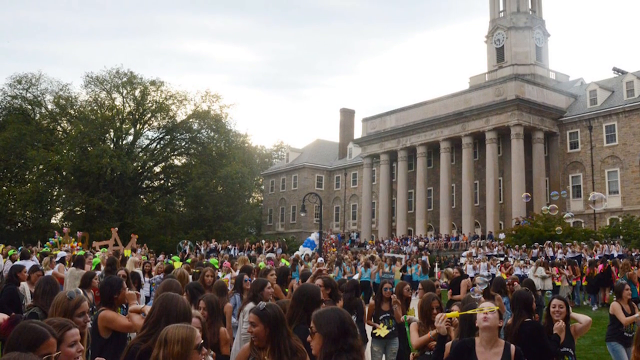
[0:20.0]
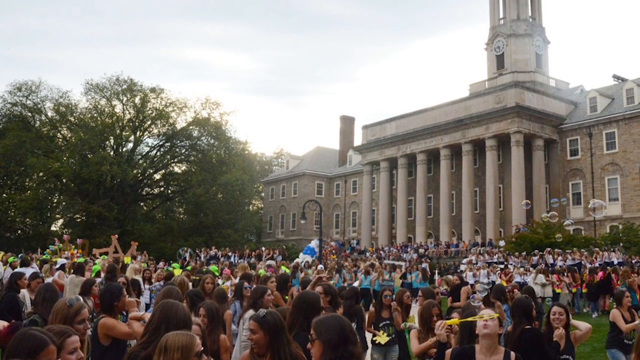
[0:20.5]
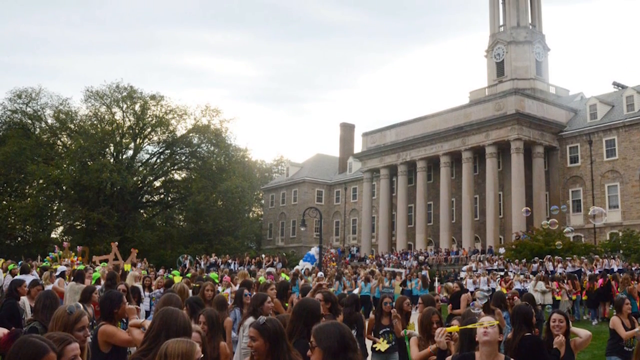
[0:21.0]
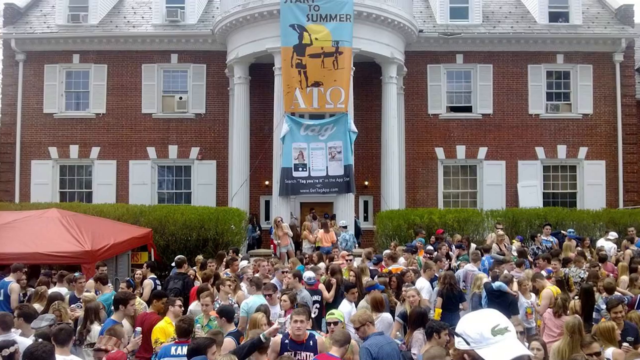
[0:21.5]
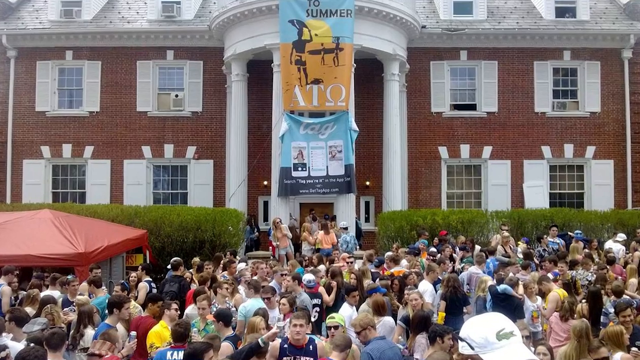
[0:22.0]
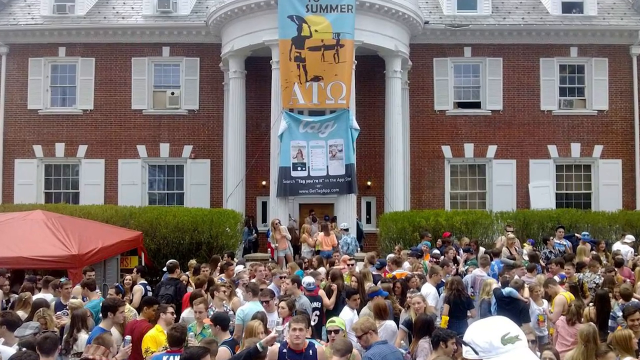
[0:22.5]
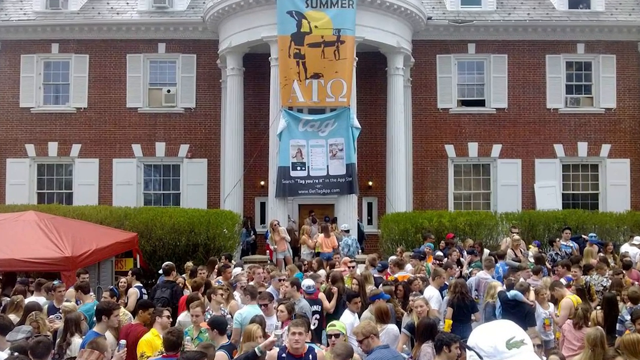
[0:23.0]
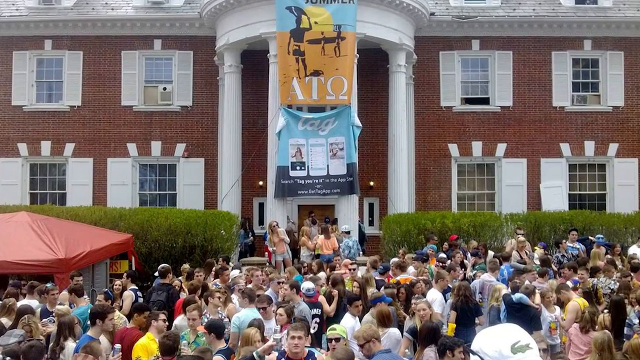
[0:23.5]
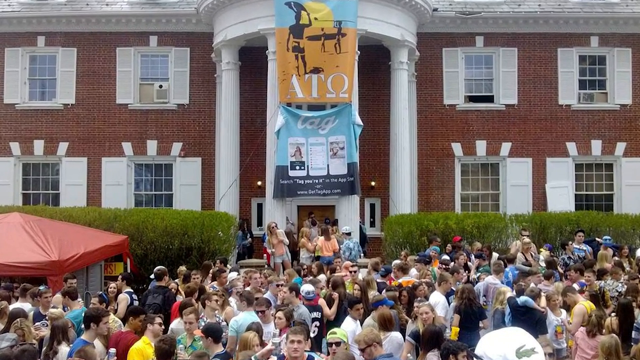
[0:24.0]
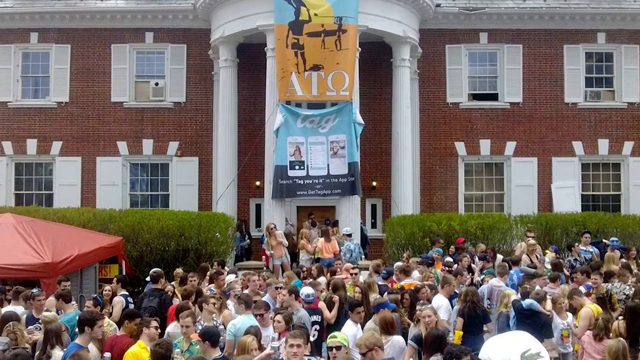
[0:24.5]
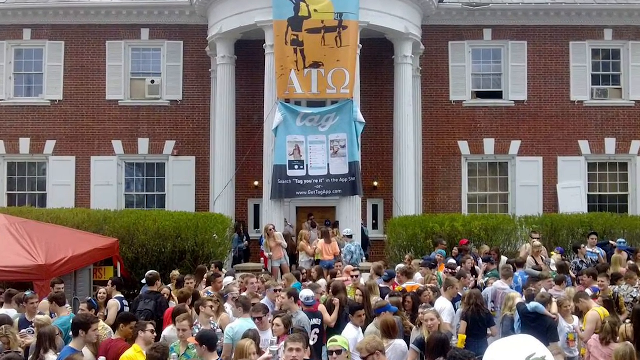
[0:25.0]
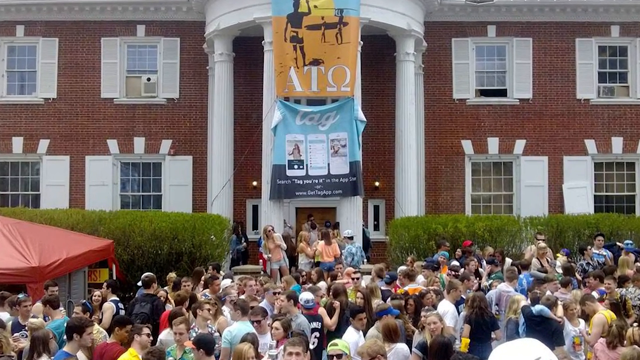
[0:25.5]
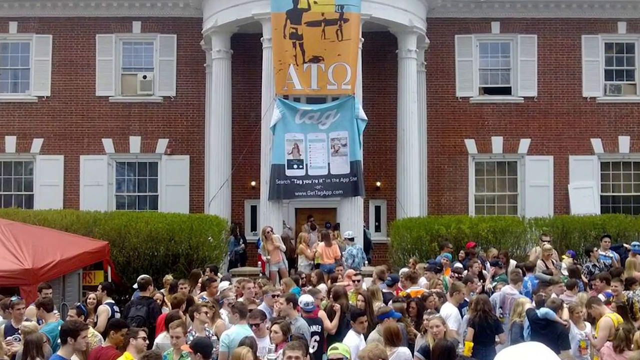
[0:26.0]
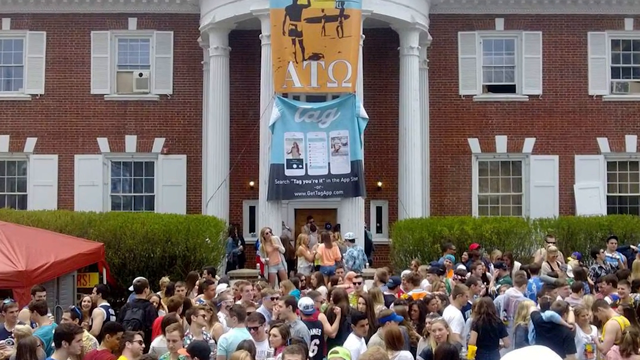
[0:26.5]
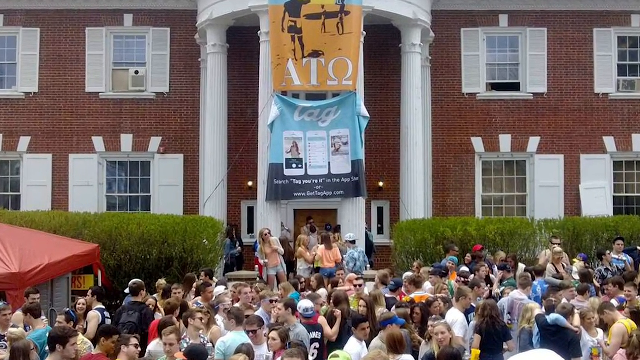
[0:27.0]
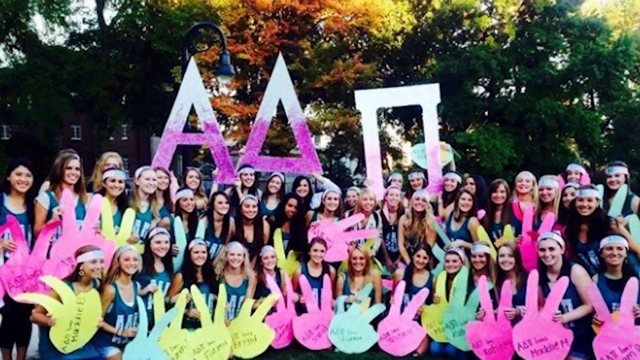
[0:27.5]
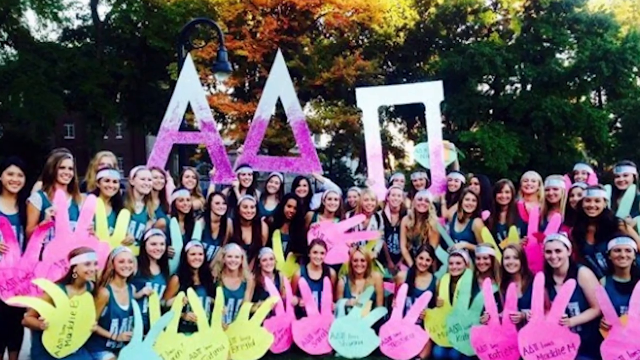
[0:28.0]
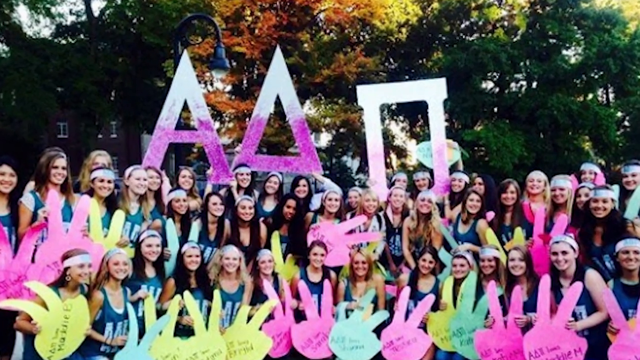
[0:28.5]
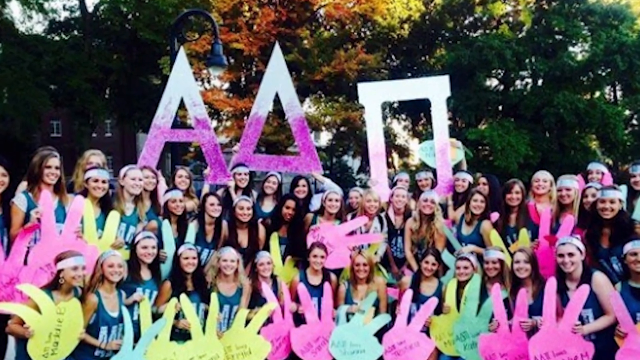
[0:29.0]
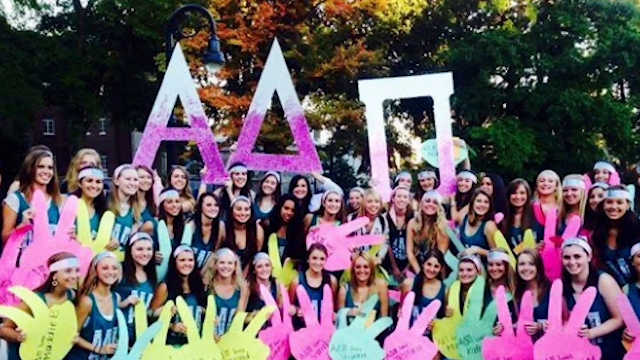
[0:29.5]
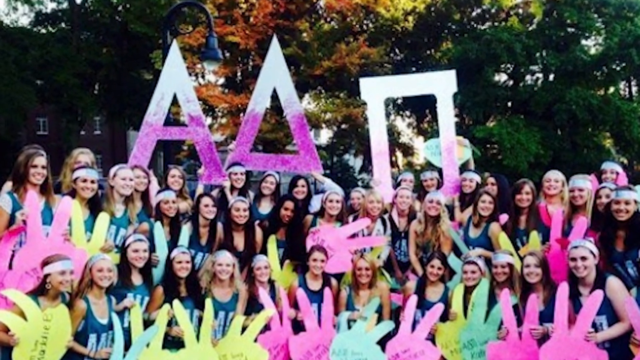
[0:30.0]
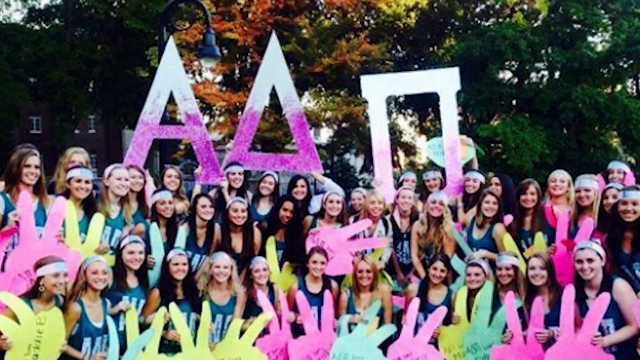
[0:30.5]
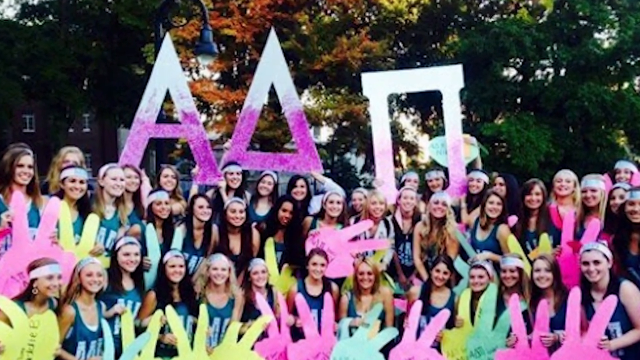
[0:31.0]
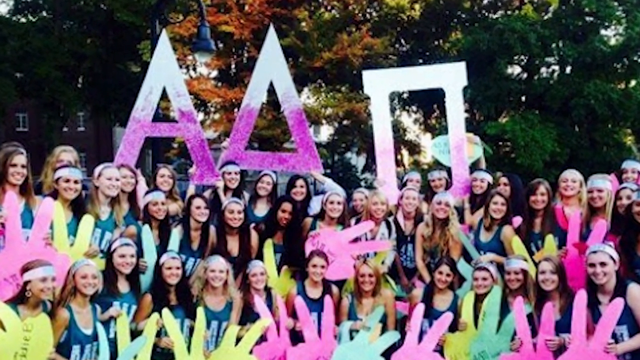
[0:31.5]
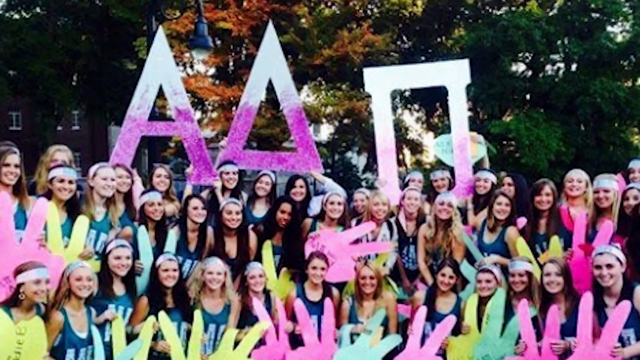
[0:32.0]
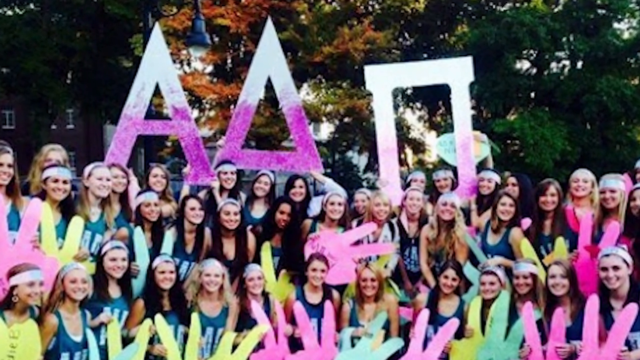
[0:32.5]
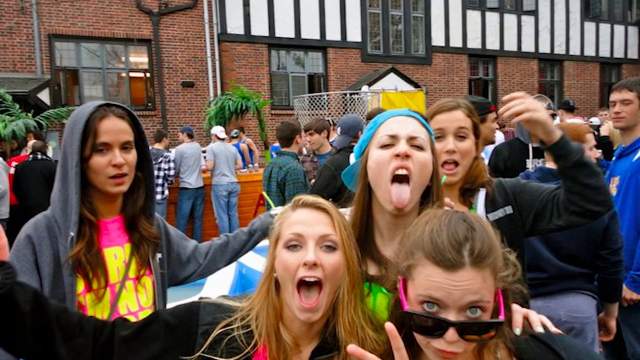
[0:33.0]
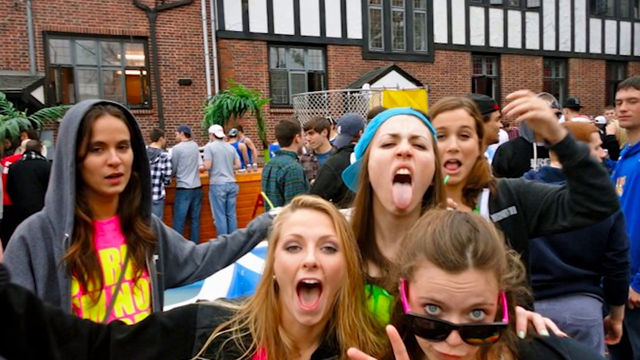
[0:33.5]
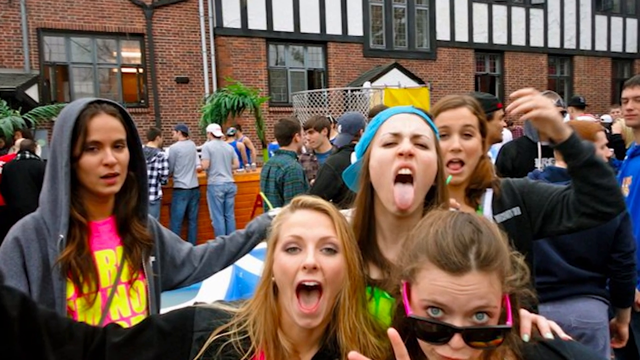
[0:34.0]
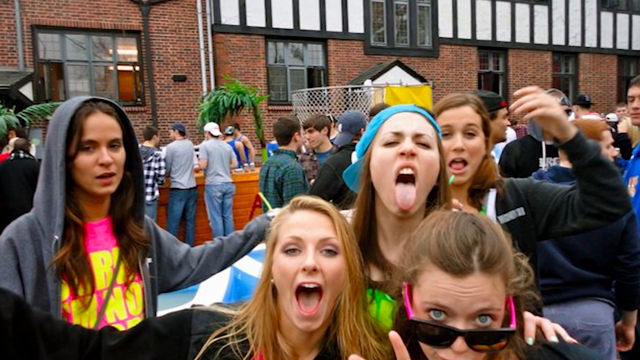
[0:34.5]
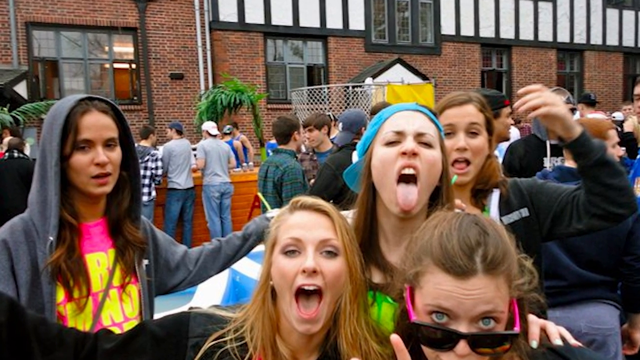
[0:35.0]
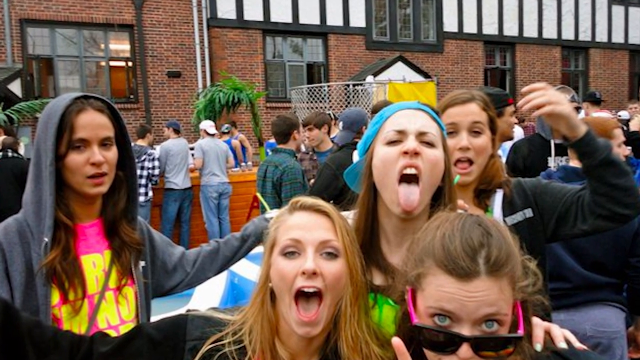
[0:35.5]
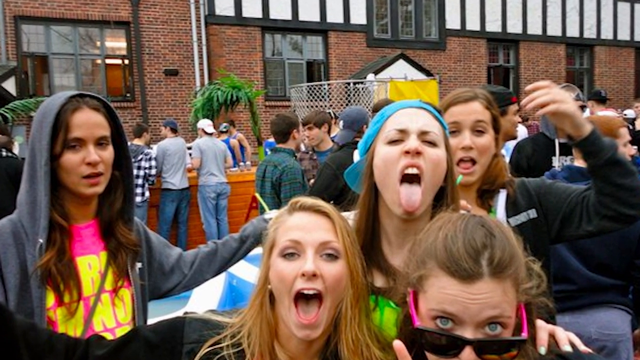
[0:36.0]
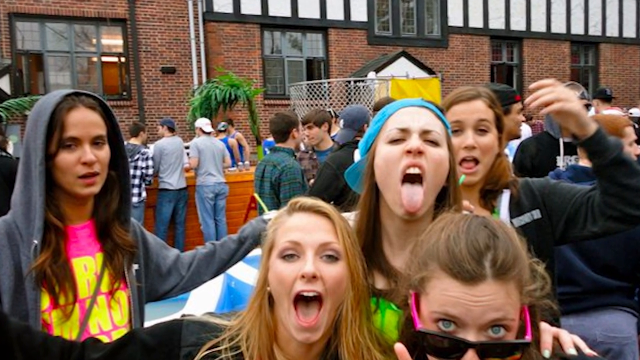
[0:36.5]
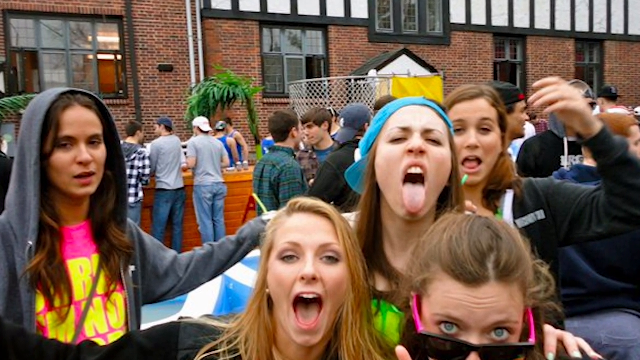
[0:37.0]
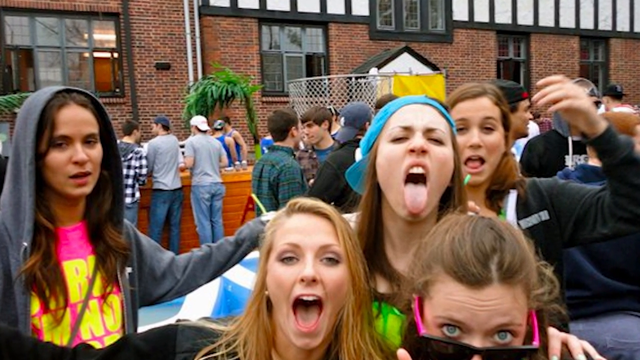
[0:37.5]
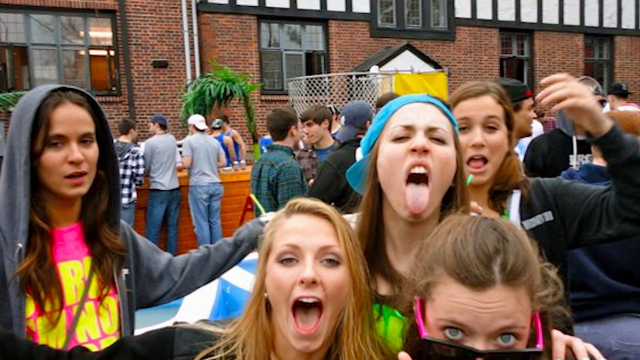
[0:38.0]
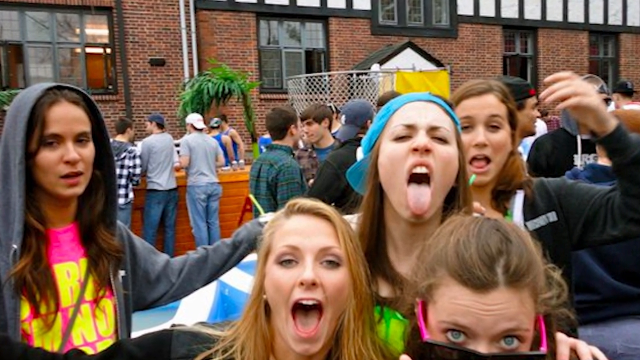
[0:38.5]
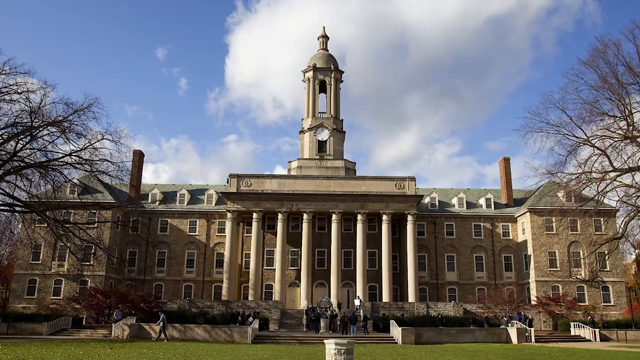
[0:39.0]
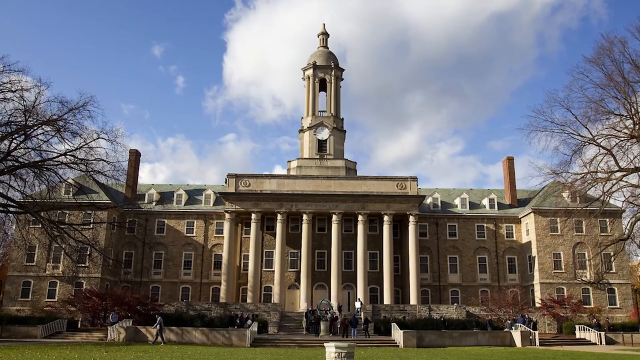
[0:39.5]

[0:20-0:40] A large crowd of Pennsylvania University students celebrates, and there is artwork written on the building, including a tag reading "ATQ". Next, the women hold balloons and letters shaped like A, A and N. Different images taken on the celebration day scroll by, and the university building keeps appearing, with a large number of students crowded at the front of it.